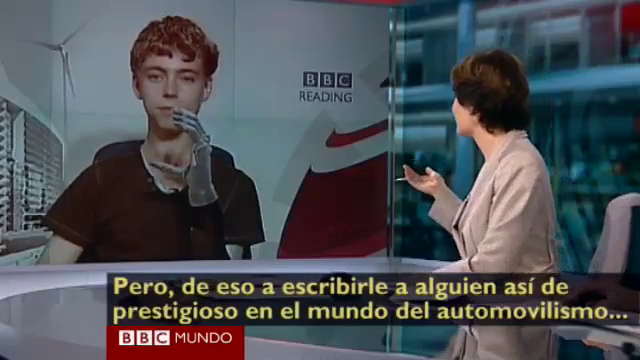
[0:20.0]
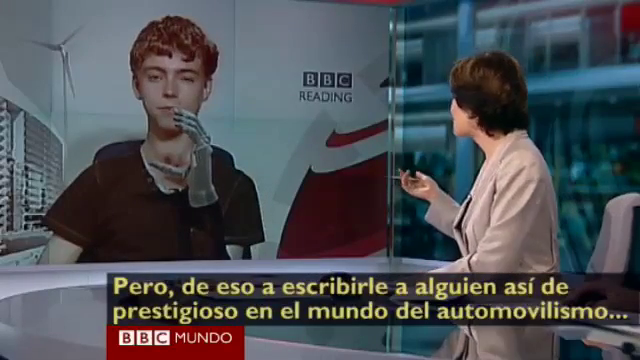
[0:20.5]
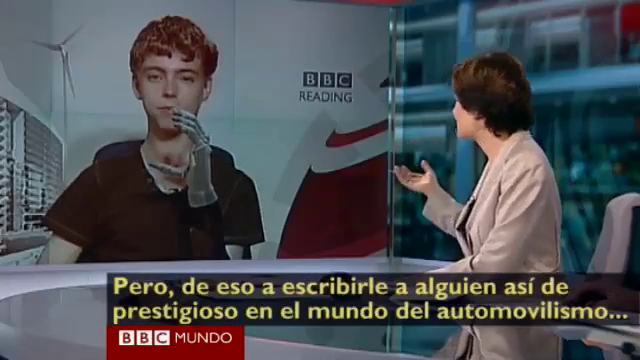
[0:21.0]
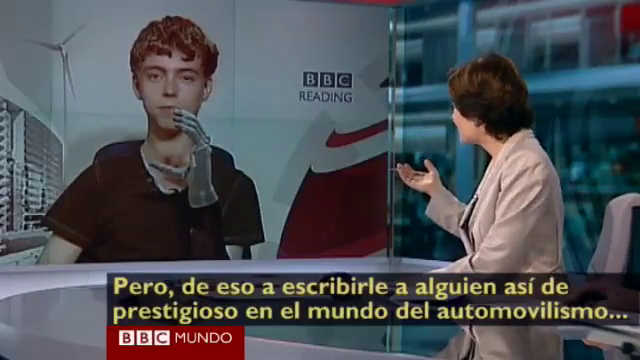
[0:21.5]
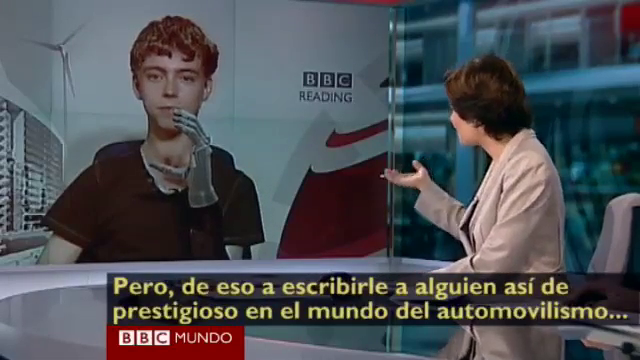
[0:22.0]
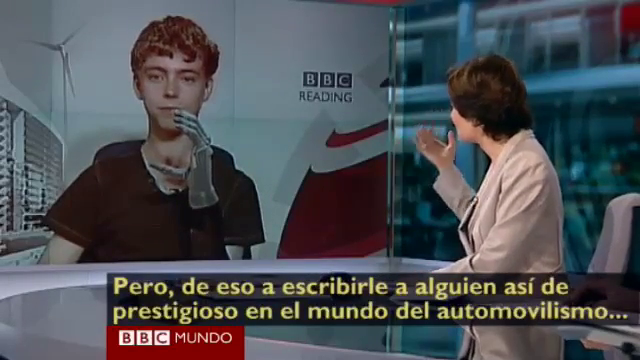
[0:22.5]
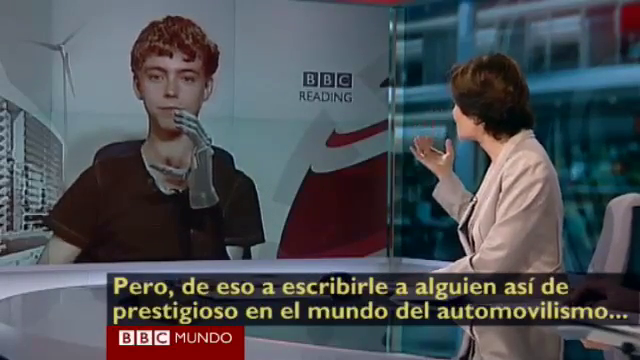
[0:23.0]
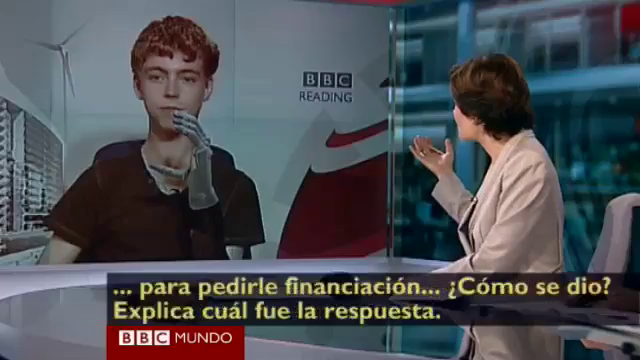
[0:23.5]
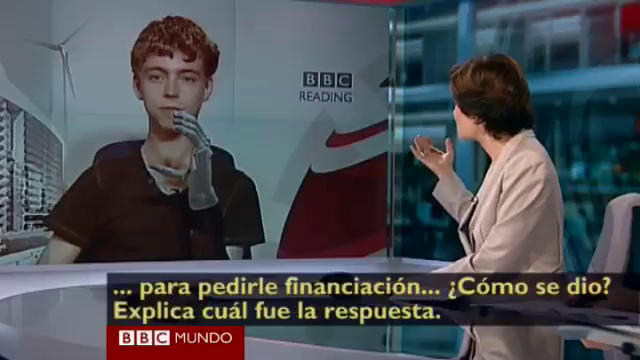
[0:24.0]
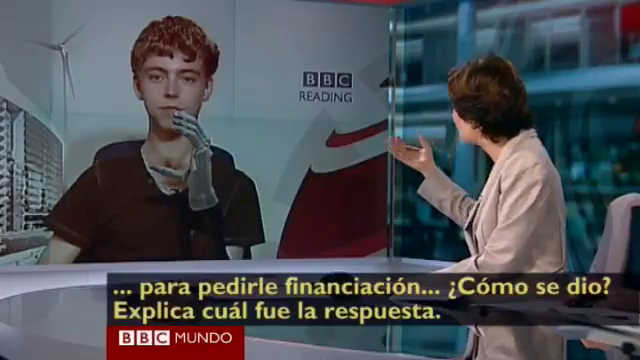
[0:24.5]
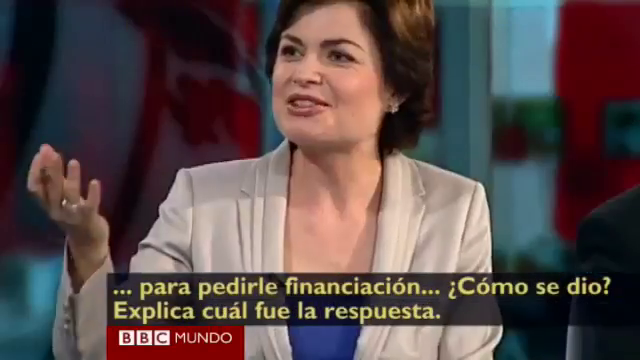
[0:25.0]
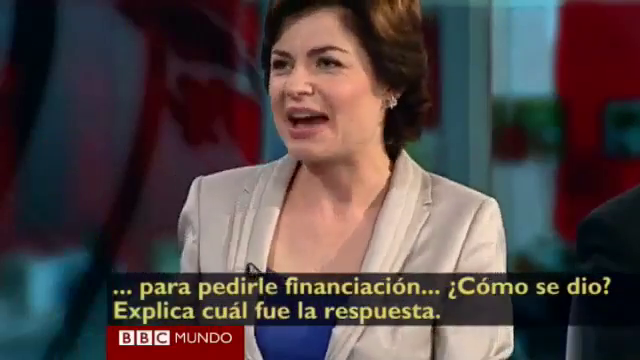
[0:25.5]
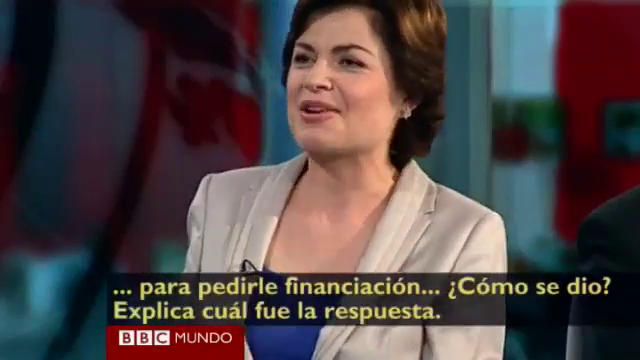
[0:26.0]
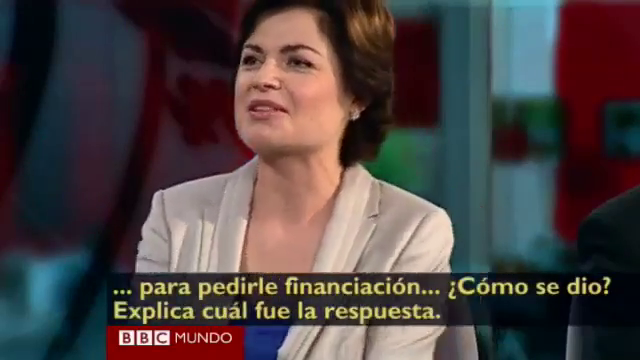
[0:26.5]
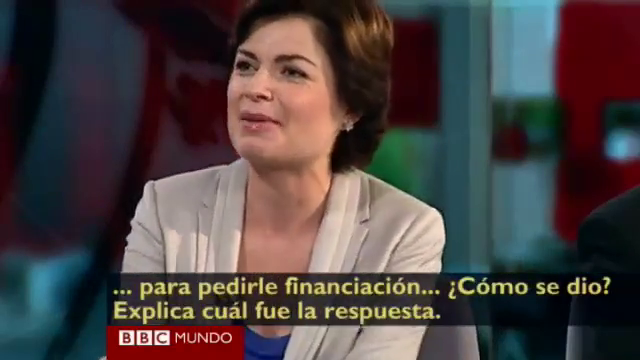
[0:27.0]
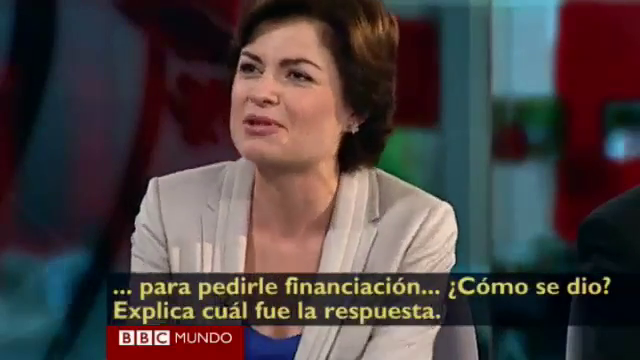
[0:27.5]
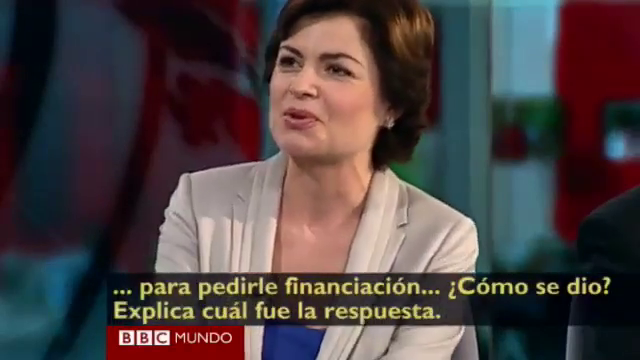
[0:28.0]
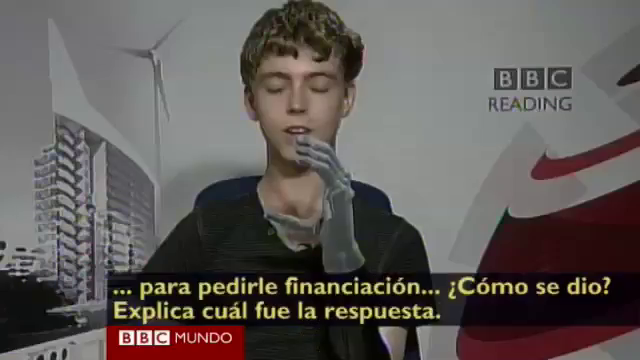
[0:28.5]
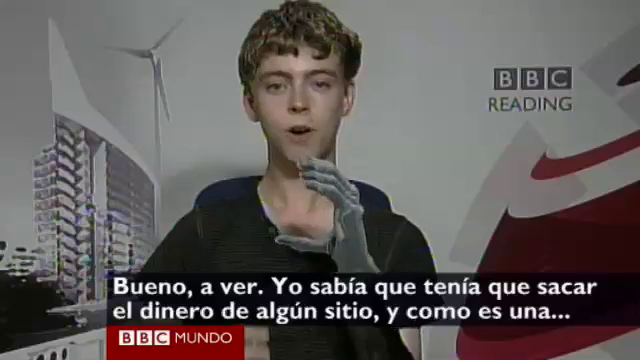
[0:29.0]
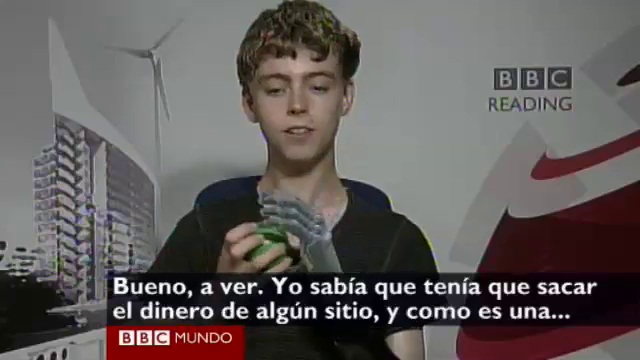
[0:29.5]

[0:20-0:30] Two screens are in the background, one of which shows the Caucasian male with curly auburn hair holding his mechanical hand to his mouth in a C shape, as if gripping a drink that isn't there. He wears a brown shirt with no collar. Behind him is a window with Venetian blinds partially open, with daytime outside, a white wall, and a fan in the upper left. In the foreground, on the right side of the frame, a woman with straight brown hair sits in a gray office chair, turned to face the boy. Her right hand is raised and sort of curled upward, palm up. She speaks to him and gestures with her right hand while her left hand is on the desk. The caption changes. The view then closes in on the woman from the front at a different angle, showing a Caucasian woman, maybe in her 40s, speaking in an animated way while looking at him. The camera angle switches to him. He places his flesh and blood hand in the mechanical hand in front of him, looks down at it and speaks.